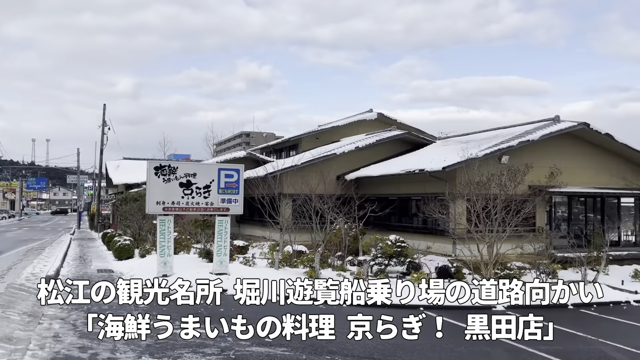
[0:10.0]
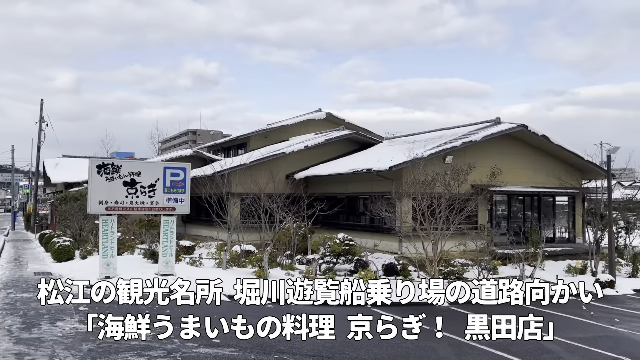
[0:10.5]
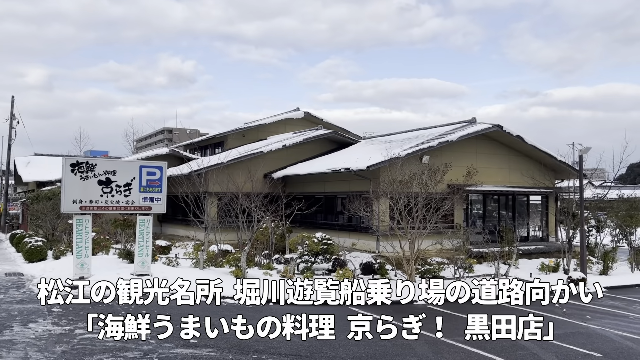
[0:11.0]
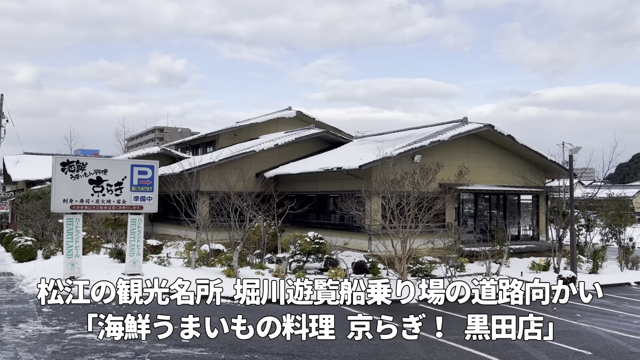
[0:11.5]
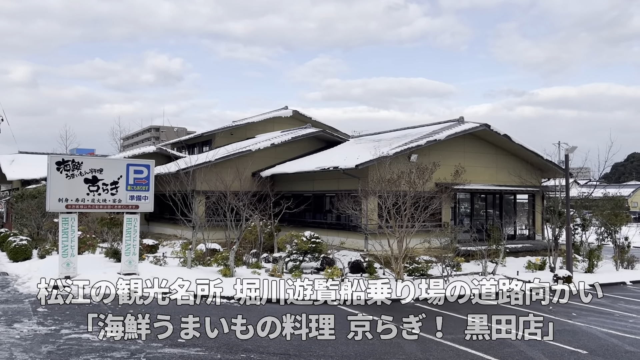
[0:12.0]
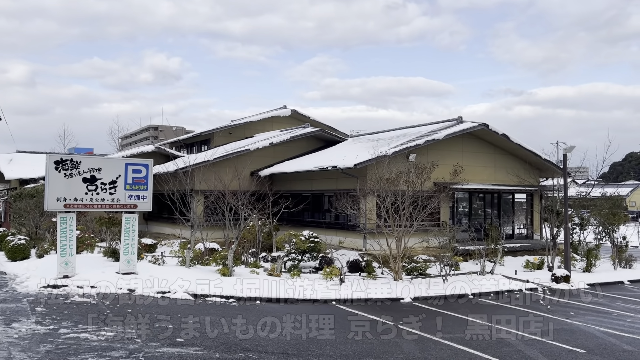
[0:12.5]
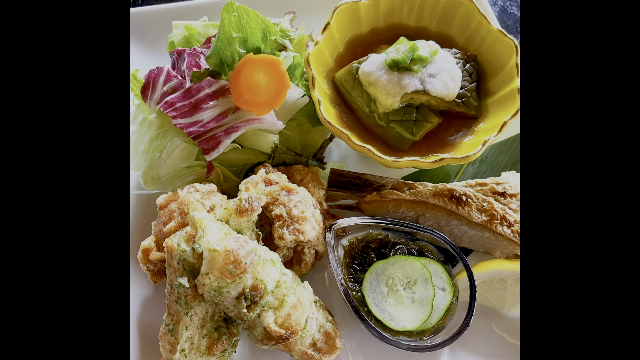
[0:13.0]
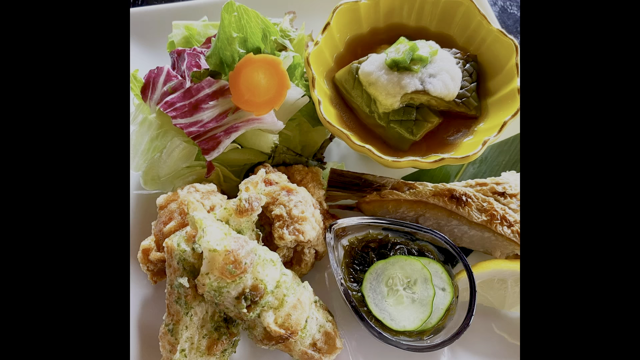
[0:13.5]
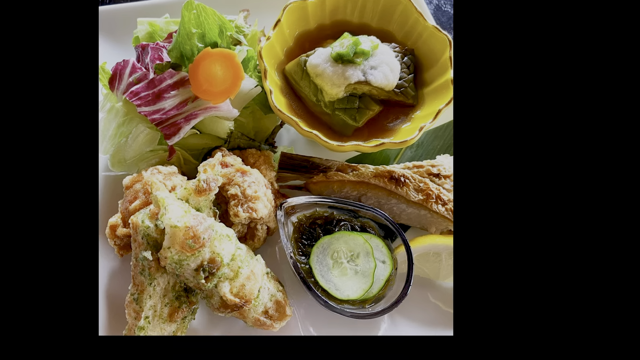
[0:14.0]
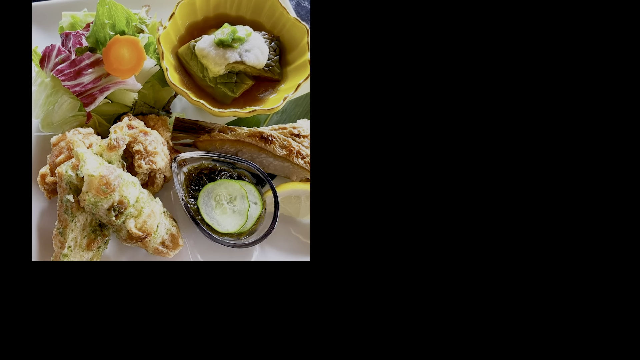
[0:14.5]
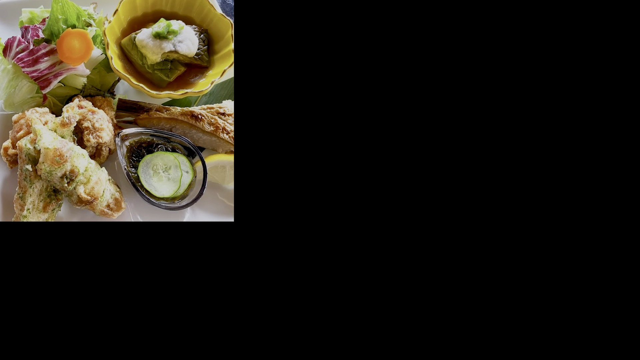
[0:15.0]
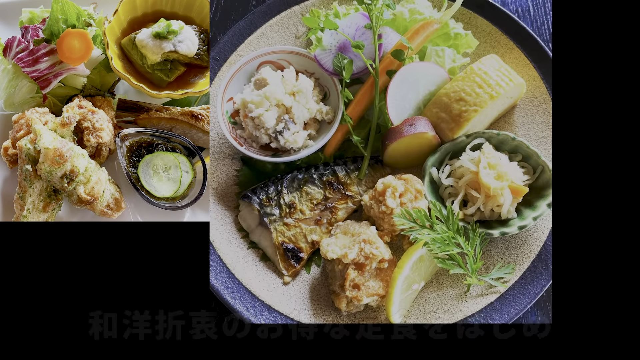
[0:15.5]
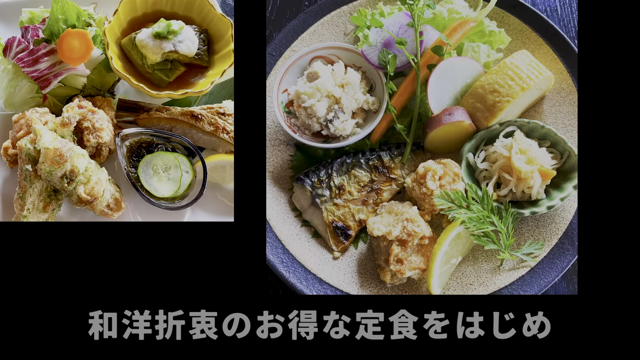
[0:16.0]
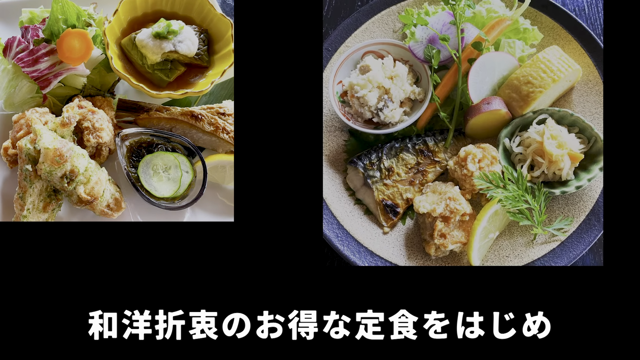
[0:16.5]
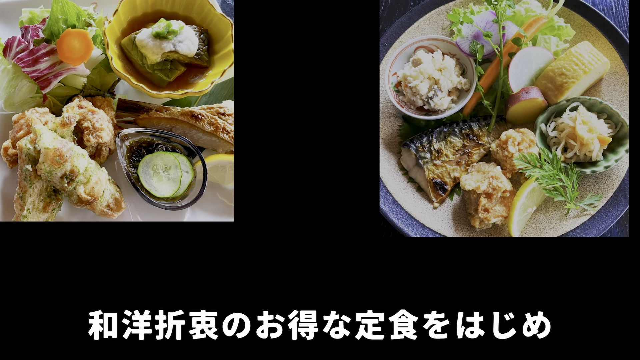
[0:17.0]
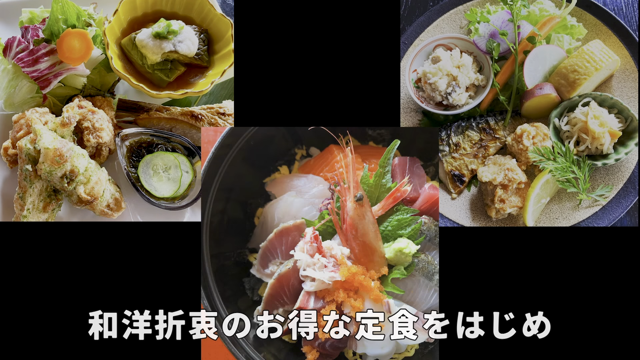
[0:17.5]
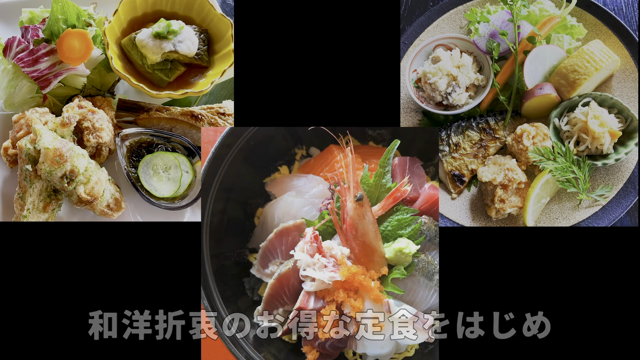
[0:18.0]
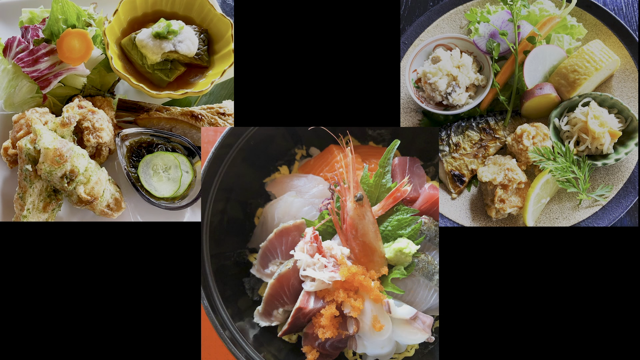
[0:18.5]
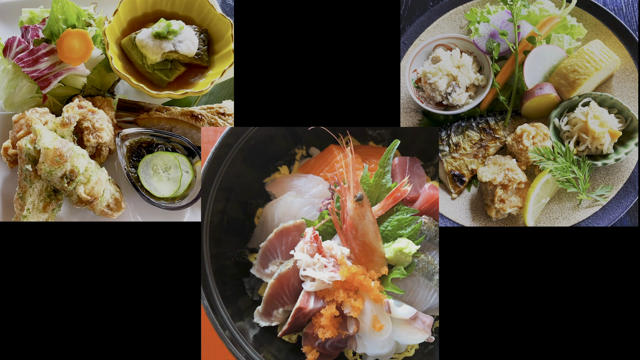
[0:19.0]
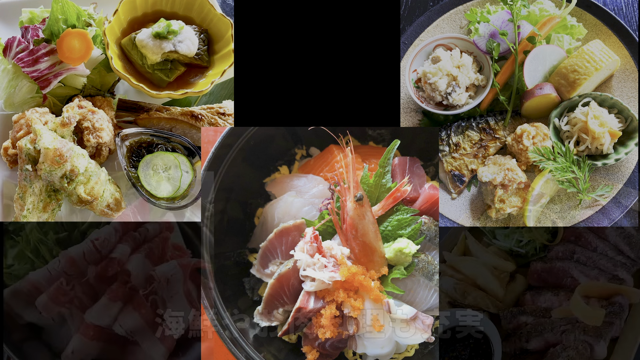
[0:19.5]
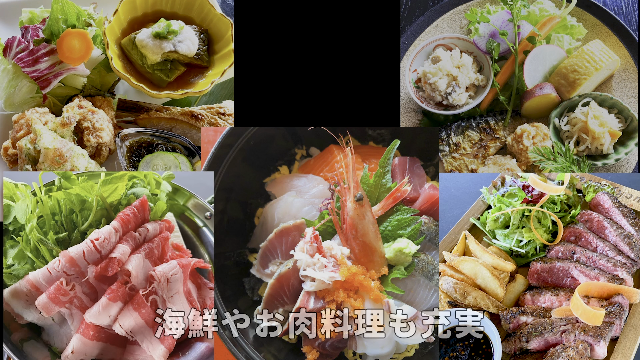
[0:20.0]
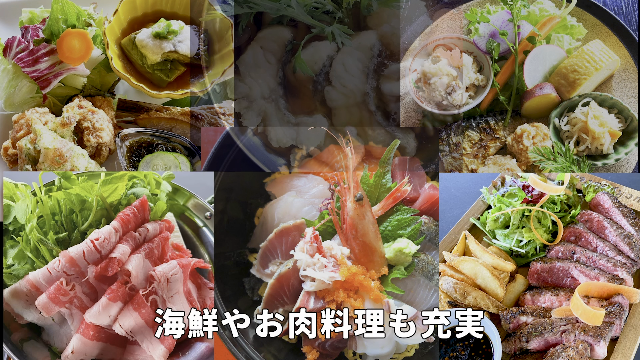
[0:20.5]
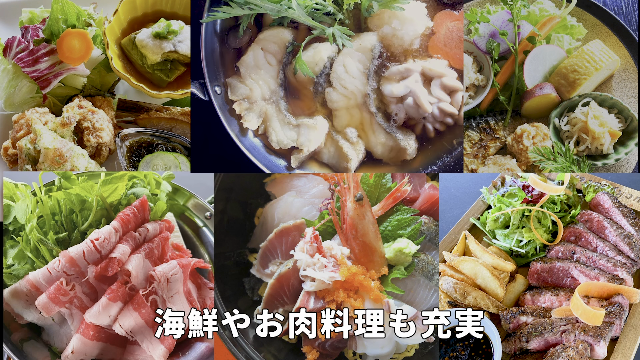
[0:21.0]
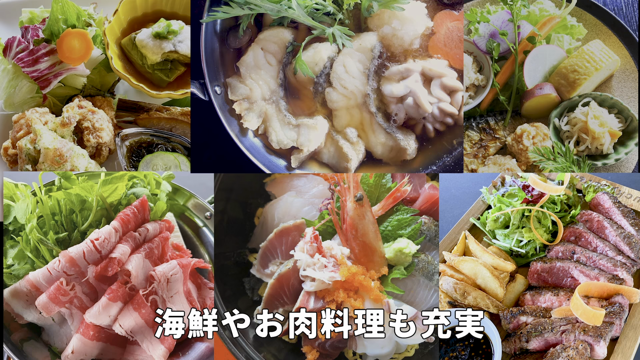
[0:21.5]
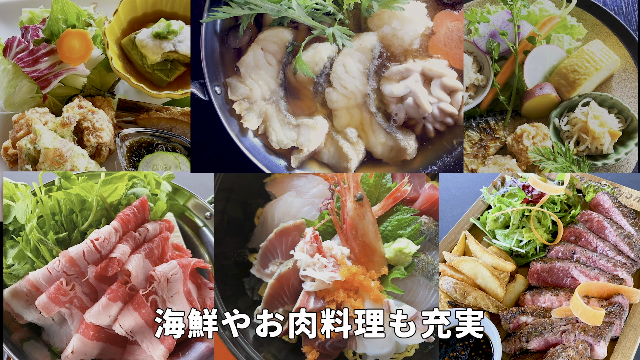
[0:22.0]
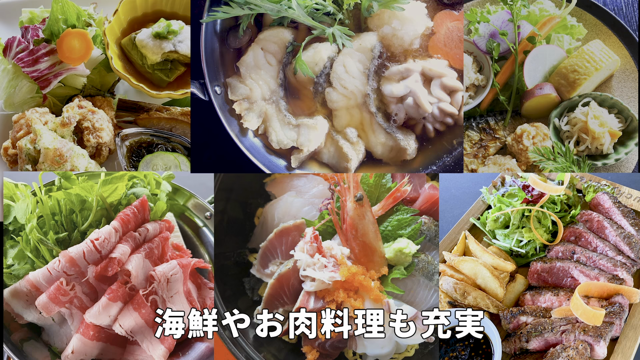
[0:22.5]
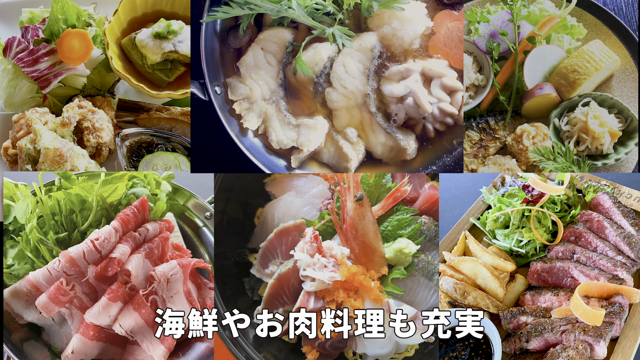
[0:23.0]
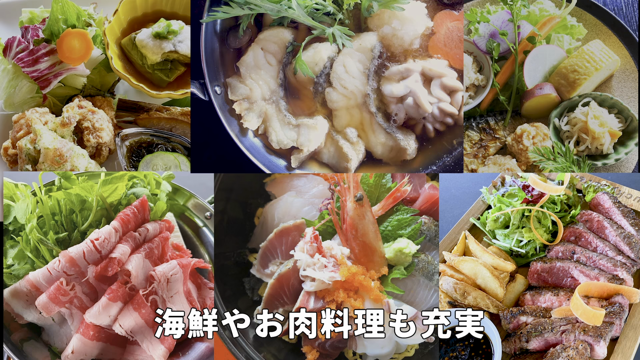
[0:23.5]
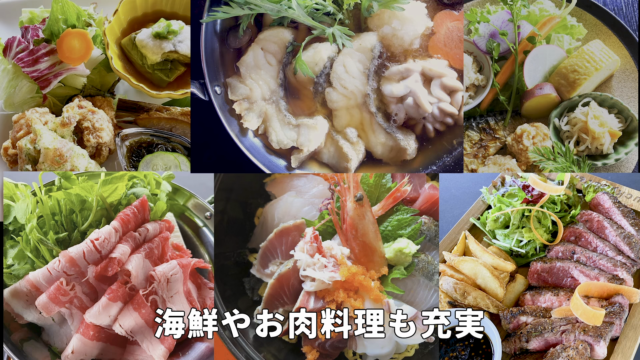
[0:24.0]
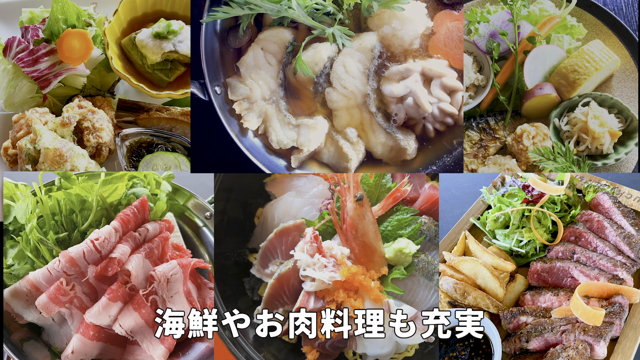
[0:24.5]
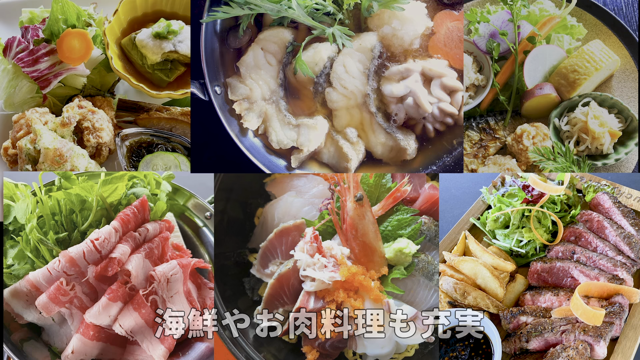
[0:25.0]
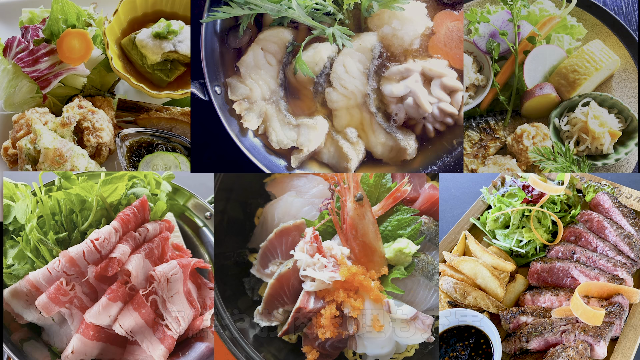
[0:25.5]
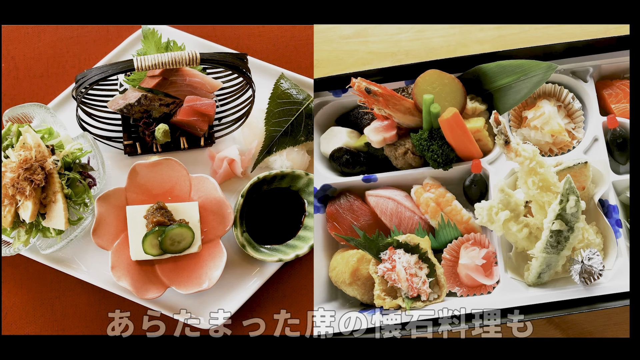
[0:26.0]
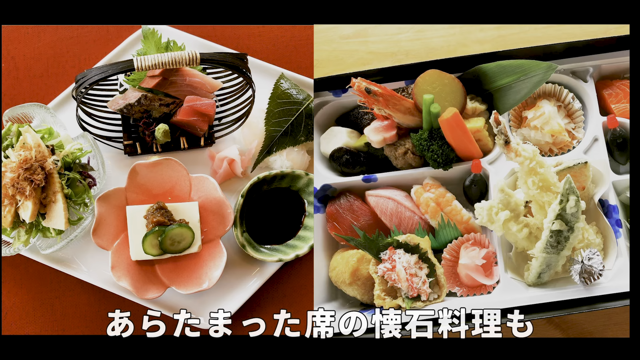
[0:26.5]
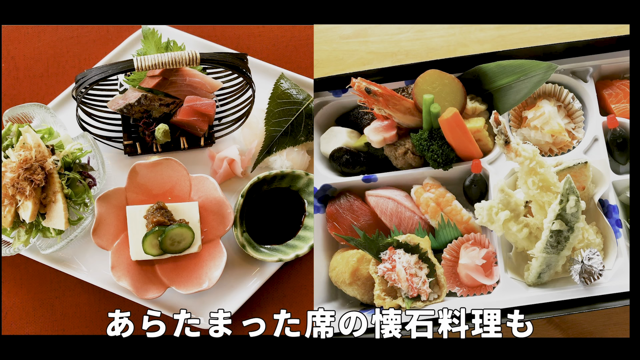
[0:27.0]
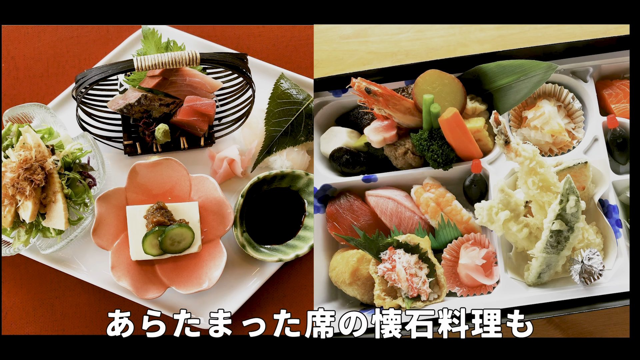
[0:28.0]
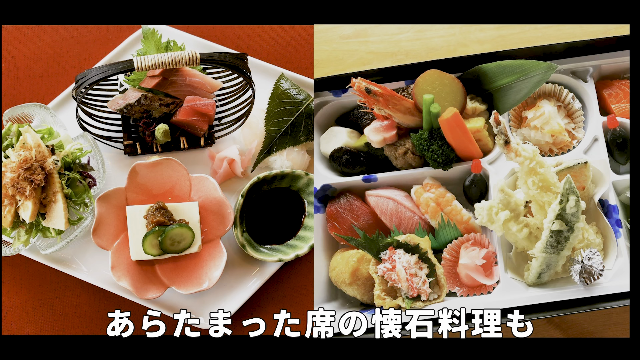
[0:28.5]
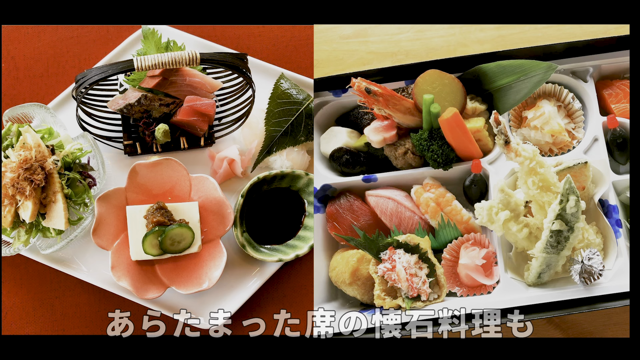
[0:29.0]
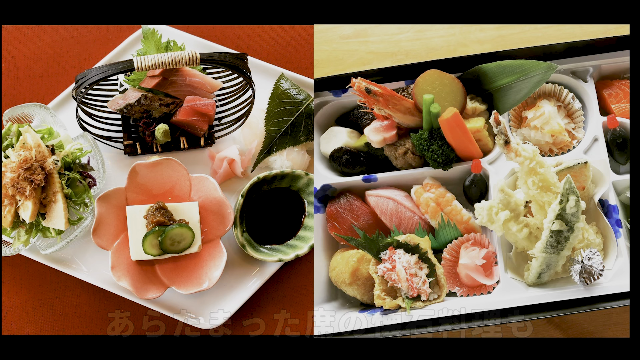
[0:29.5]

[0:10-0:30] The camera briefly stops on a brown building. The video then cuts to different food: lettuce, onion, tomato and Chinese or Japanese dishes. There are two dishes, then three, with possibly some seafood and other types of cuisine, then five different dishes, and then six. Japanese or Chinese text is at the bottom of the screen. The video cuts to two specific dishes and then to three more dishes. The dishes include vegetables such as carrots and leafy greens, fish or shrimp, various raw meats, apparently potatoes, sauerkraut, a piece of bread and various other foods. The footage seems to be a small look at the cuisine of a small Chinese, Japanese or other Asian town.